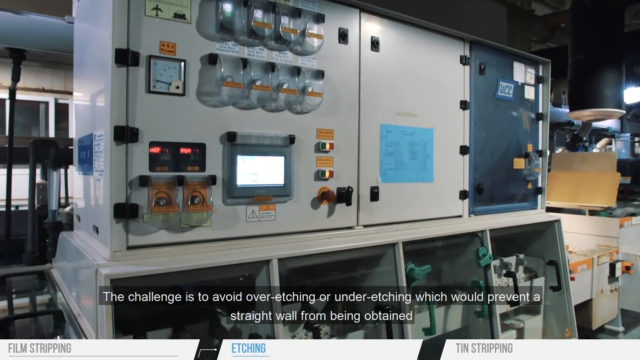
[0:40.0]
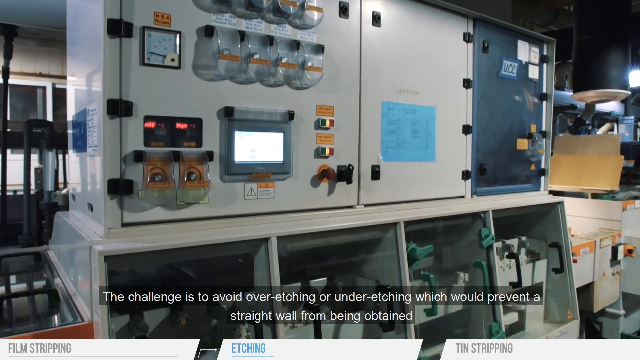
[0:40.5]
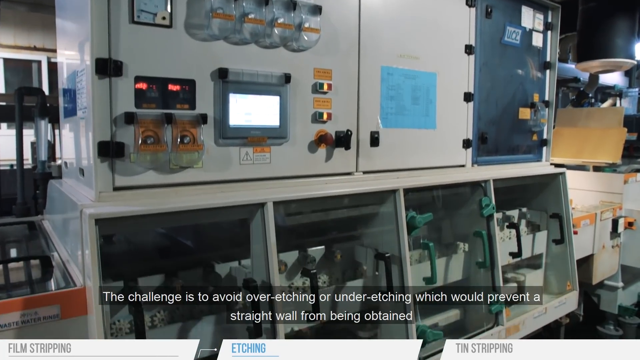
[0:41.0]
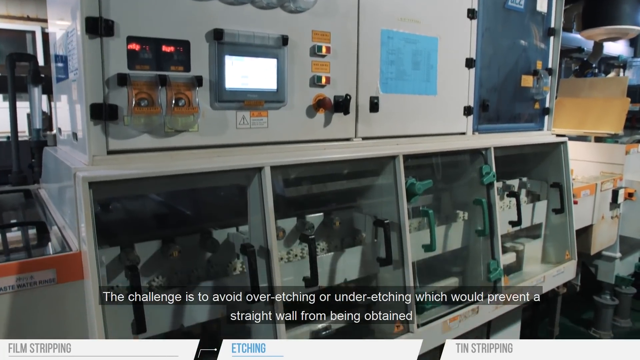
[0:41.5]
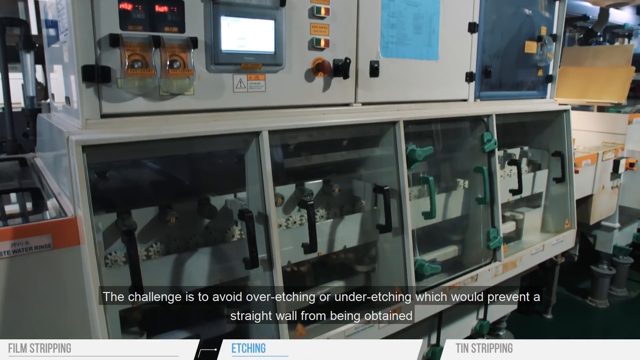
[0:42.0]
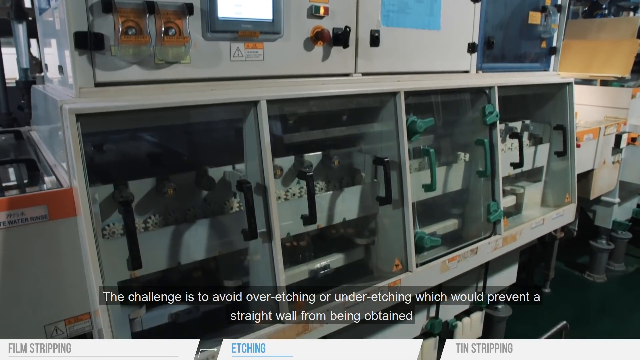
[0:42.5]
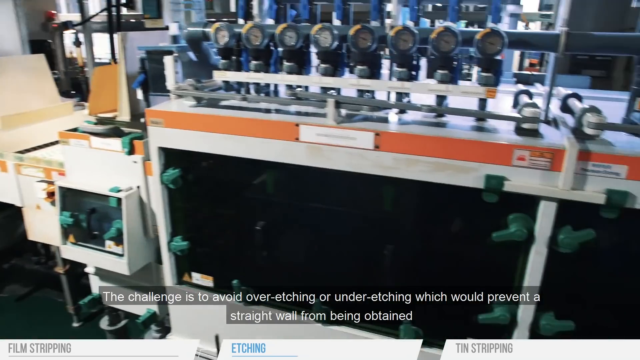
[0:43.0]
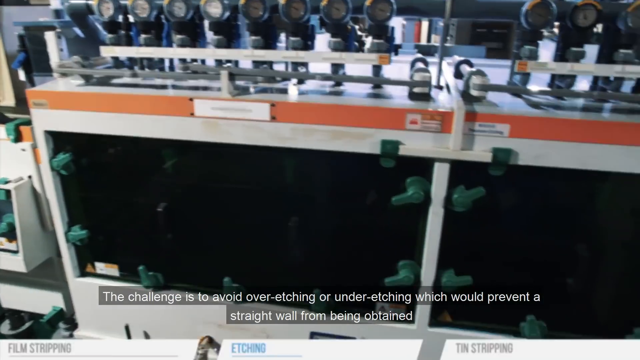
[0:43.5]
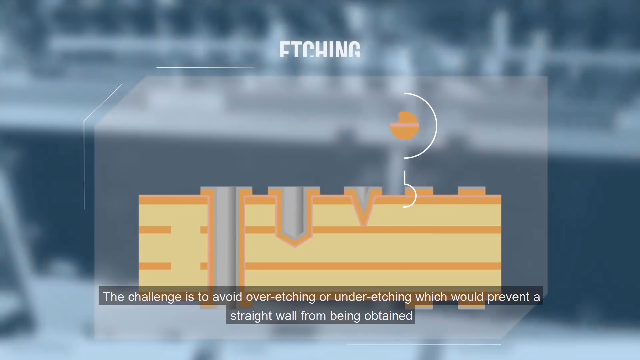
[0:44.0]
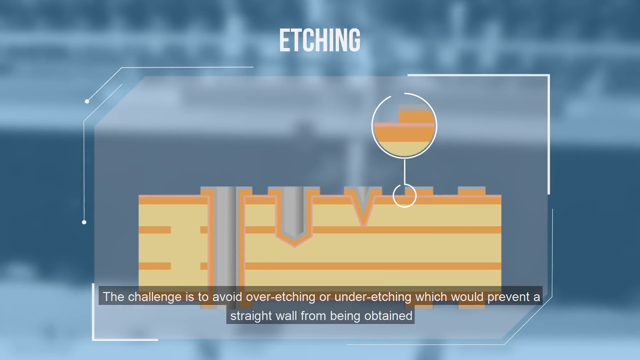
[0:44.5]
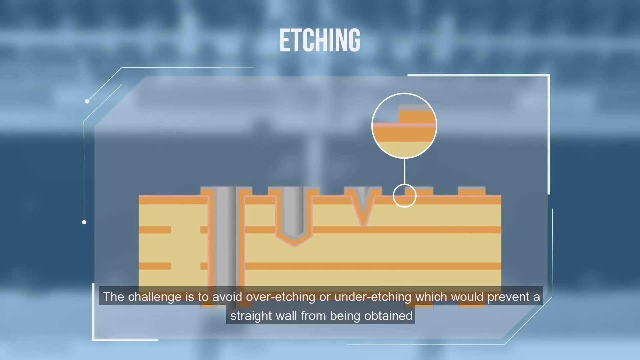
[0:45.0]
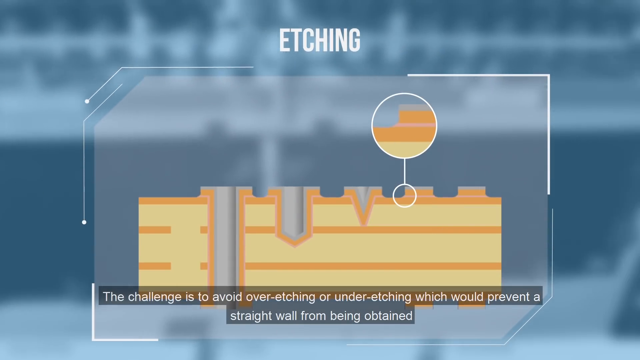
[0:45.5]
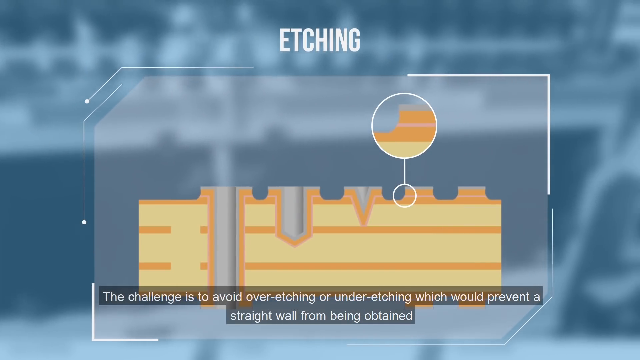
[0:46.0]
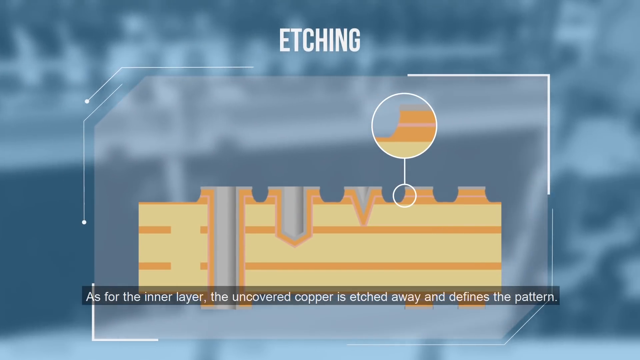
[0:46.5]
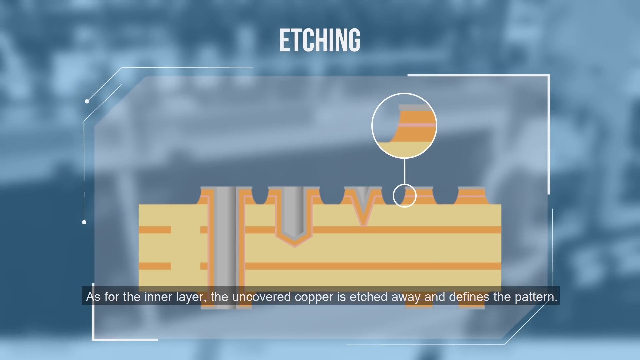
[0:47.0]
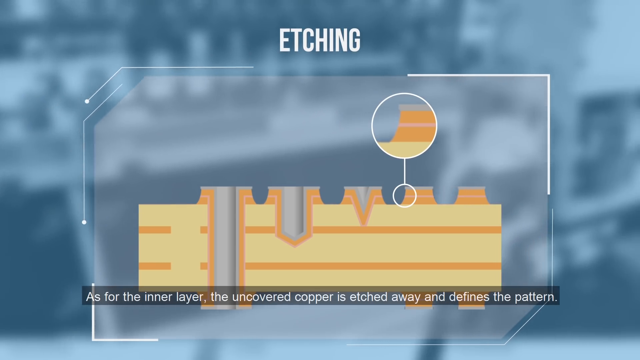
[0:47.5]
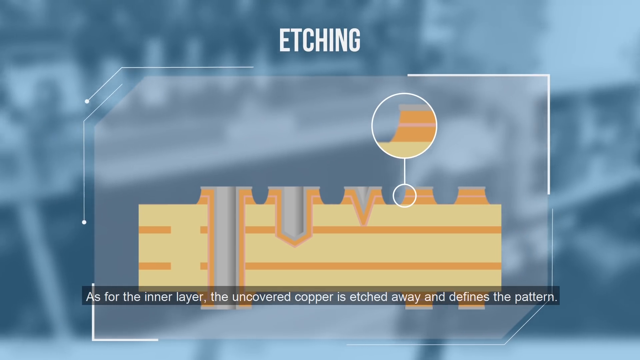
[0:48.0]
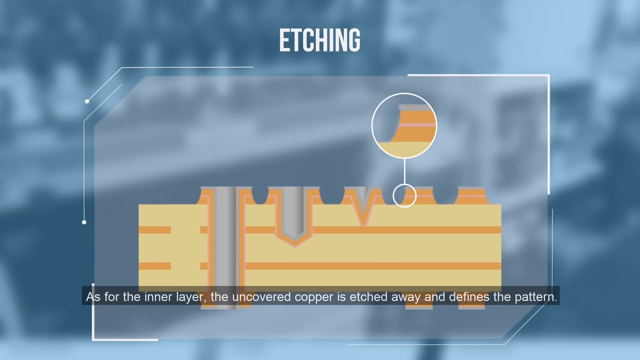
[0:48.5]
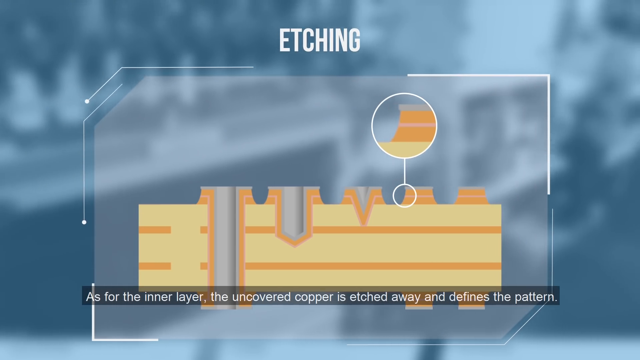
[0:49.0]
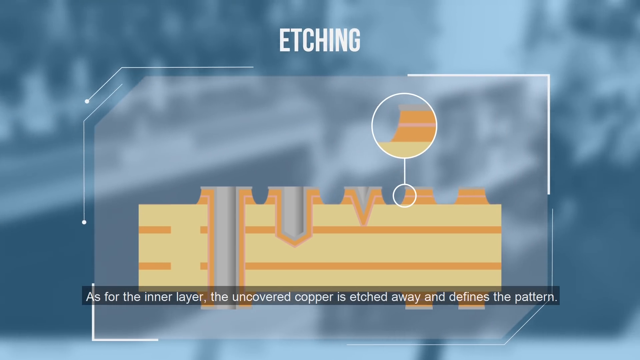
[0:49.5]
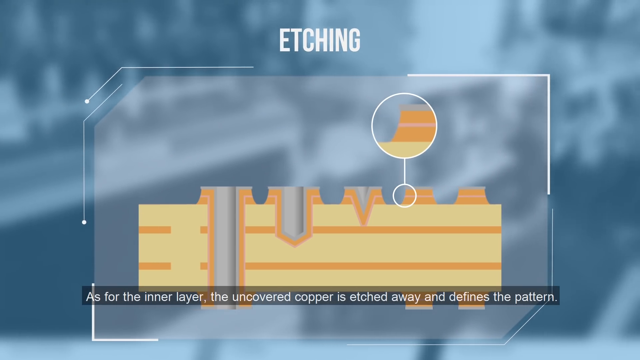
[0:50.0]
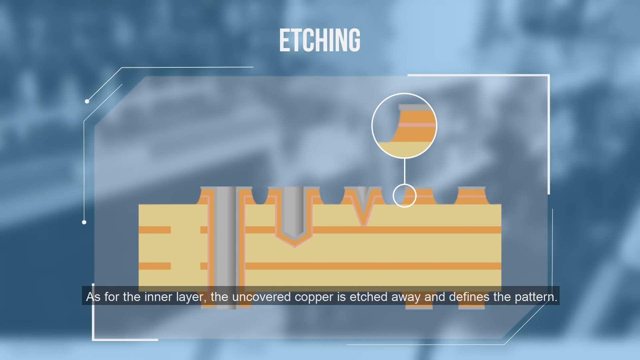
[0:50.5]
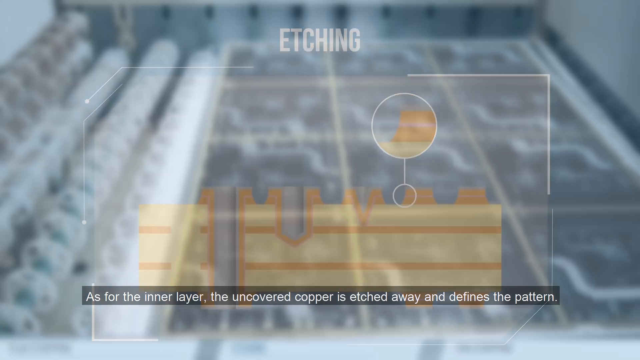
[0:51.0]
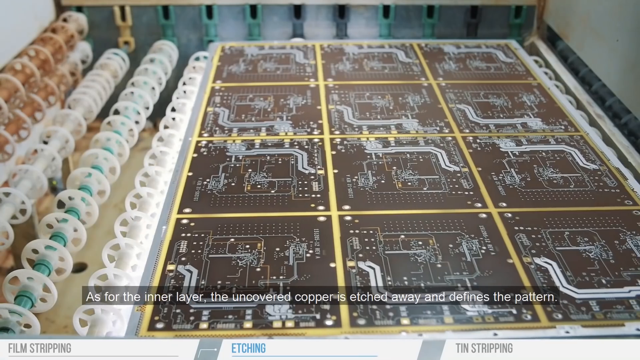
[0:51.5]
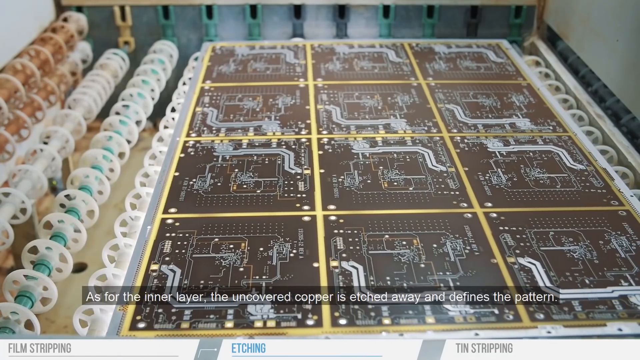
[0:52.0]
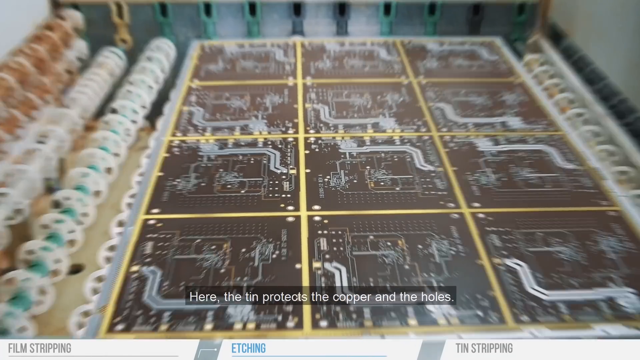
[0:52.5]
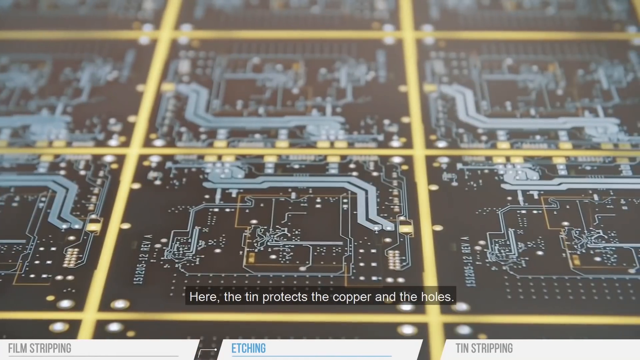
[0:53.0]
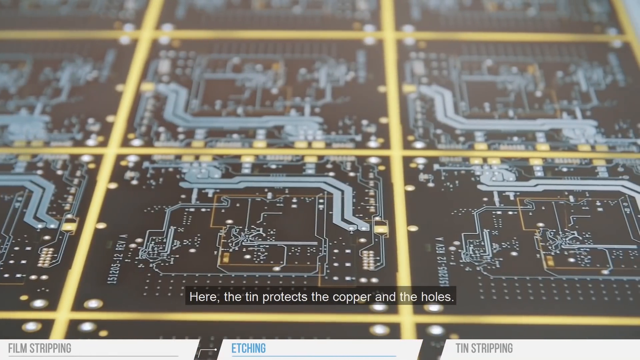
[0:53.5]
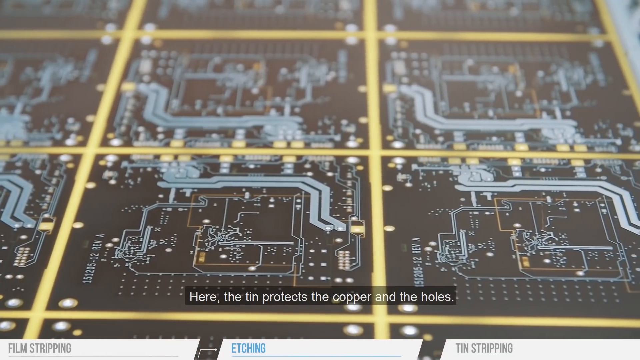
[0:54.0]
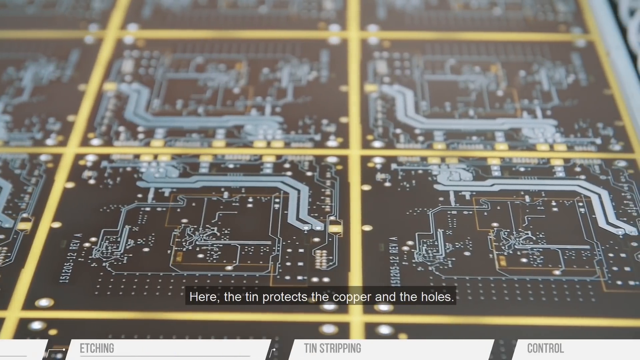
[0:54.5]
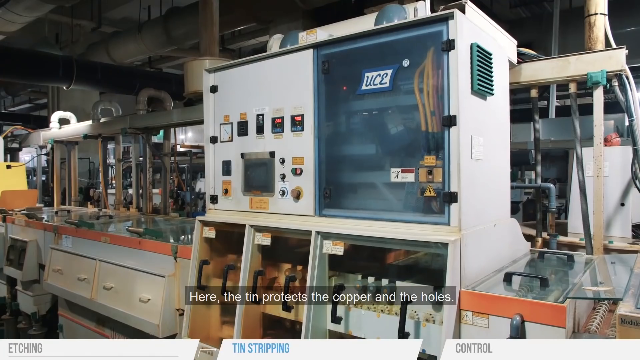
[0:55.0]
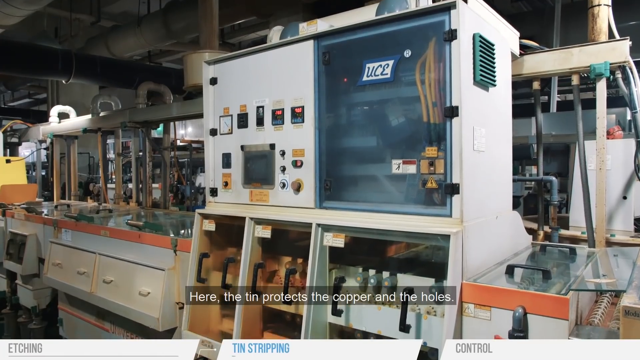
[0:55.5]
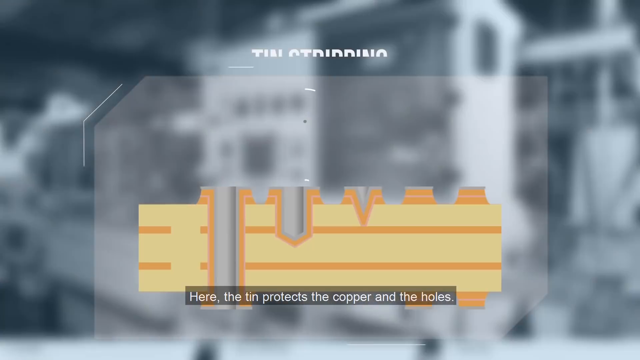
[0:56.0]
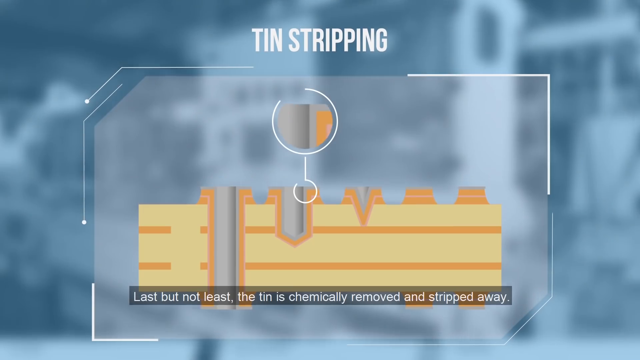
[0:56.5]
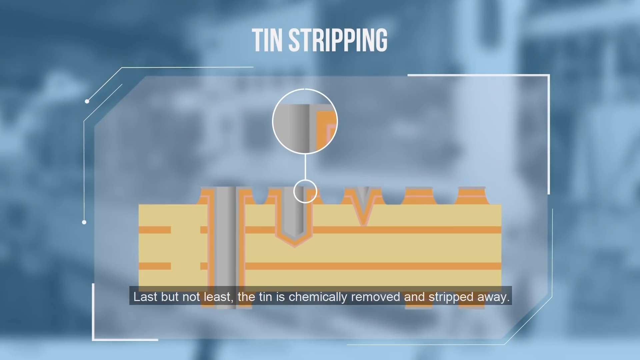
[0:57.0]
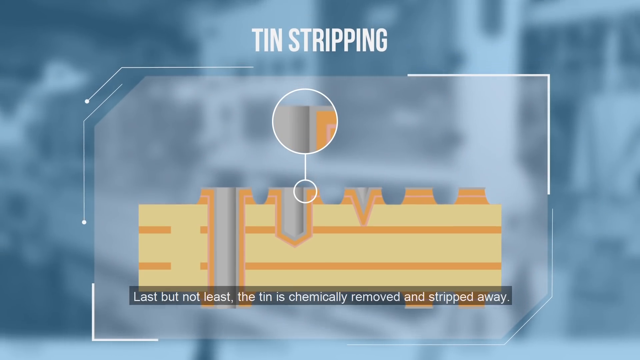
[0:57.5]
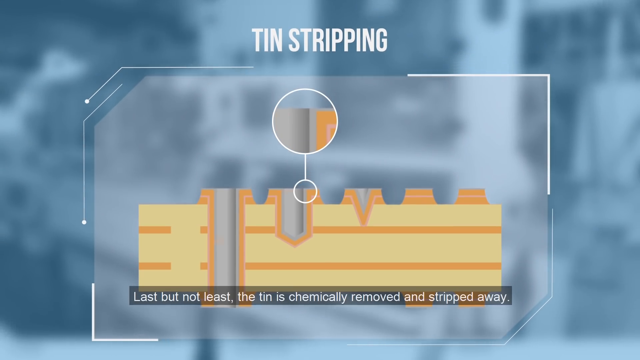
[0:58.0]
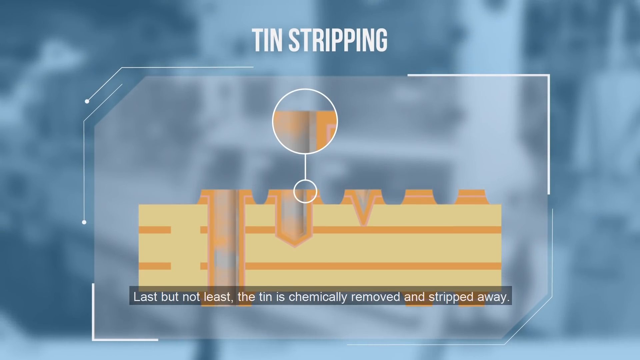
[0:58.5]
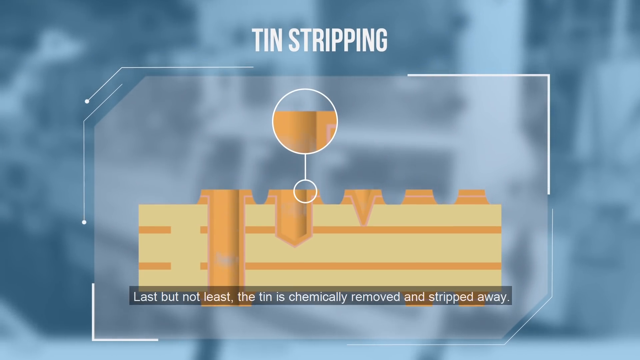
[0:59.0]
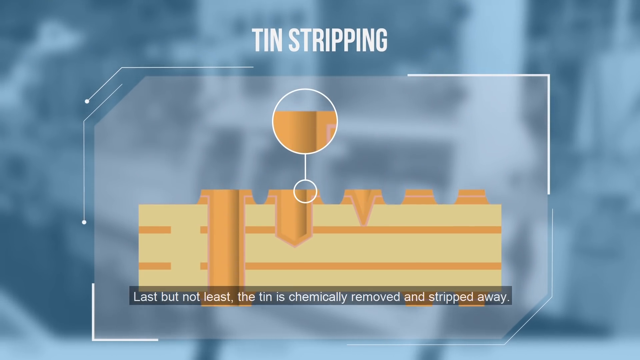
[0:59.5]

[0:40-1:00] Various pieces of elaborate industrial equipment appear, with cabinets and panels that can be looked into to see the process taking place. An animated sketch on the screen shows the next phase of the etching stage, with text stating "as for the inner layer the uncovered copper is etched away". The real process is then shown taking place in the machinery, with a close-up of some of the printed circuit boards and accompanying text reading "here the tin protects the copper and the holes". An animation then illustrates tin stripping, with text beneath it reading "last but not least the tin is chemically removed and stripped away", and the footage switches back to the machines used in the process.